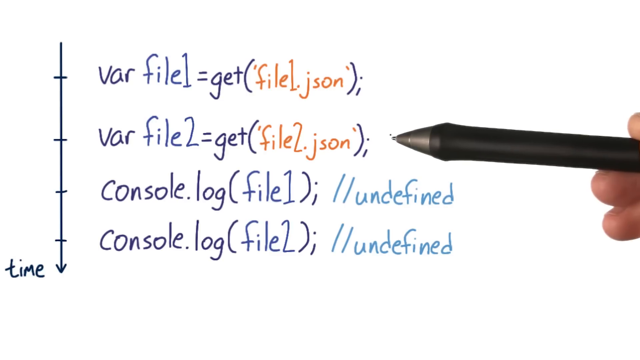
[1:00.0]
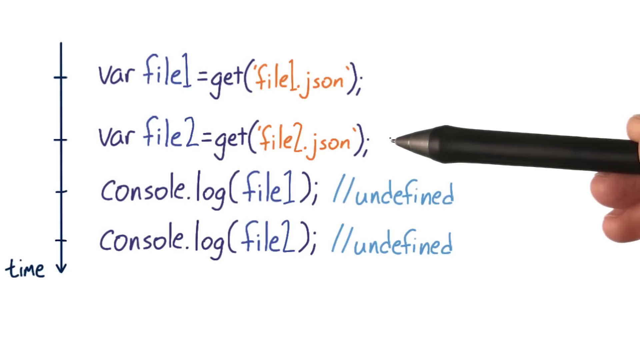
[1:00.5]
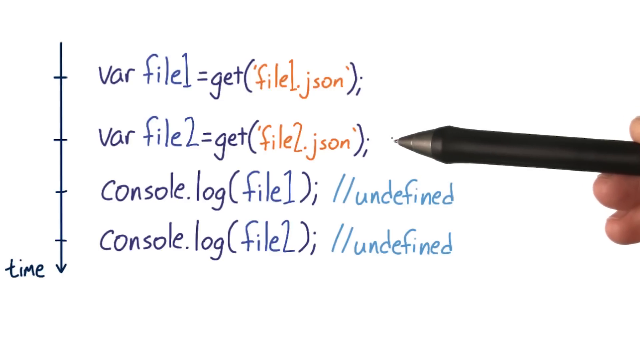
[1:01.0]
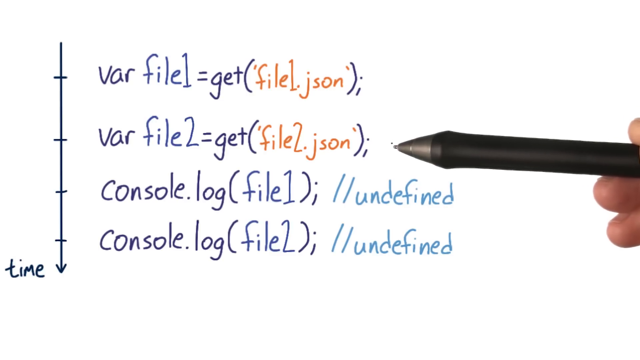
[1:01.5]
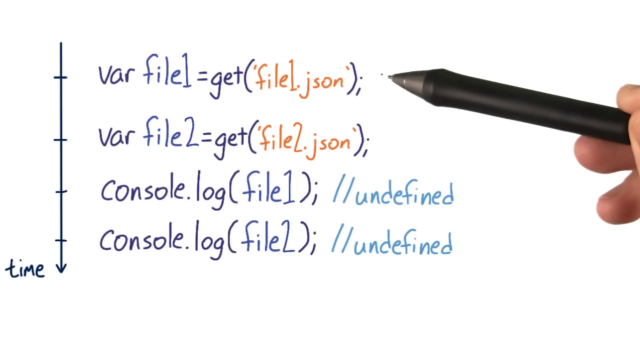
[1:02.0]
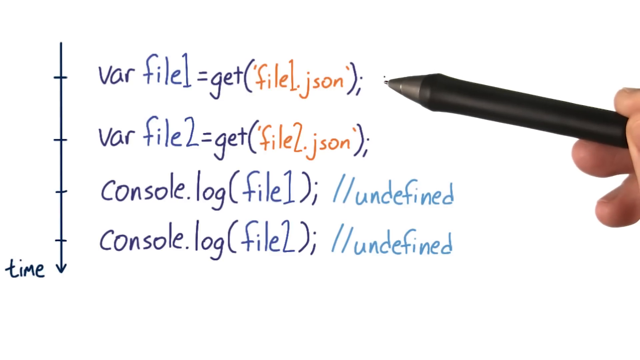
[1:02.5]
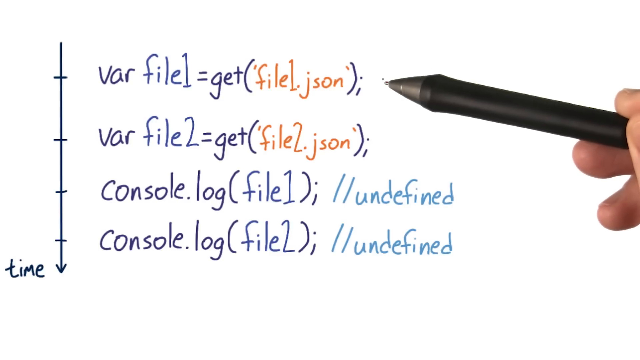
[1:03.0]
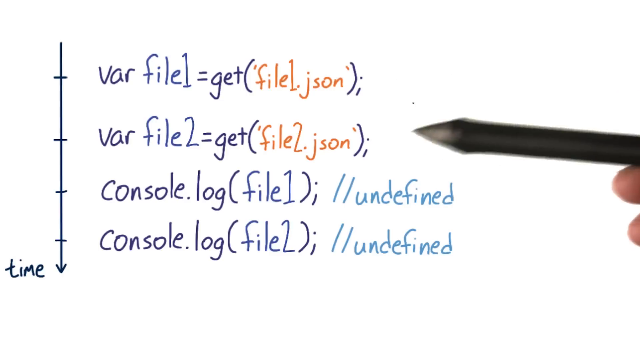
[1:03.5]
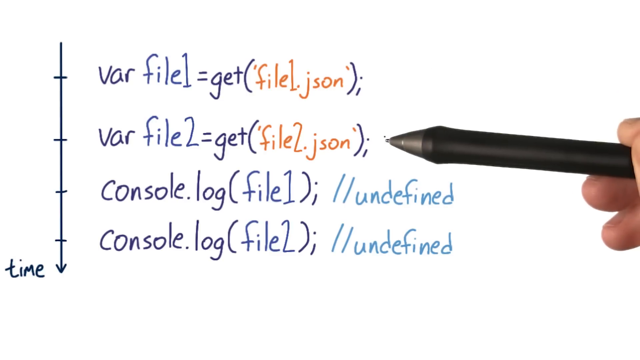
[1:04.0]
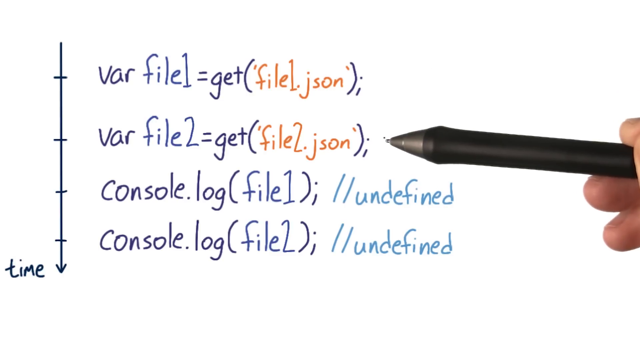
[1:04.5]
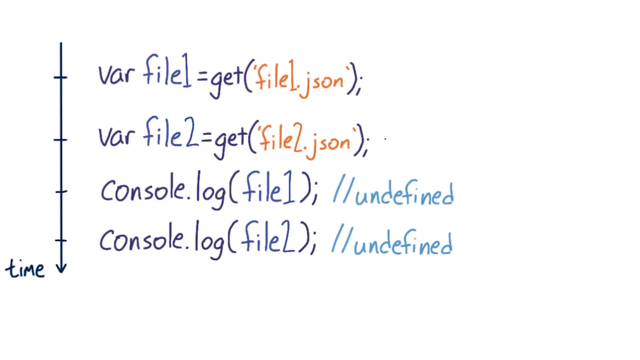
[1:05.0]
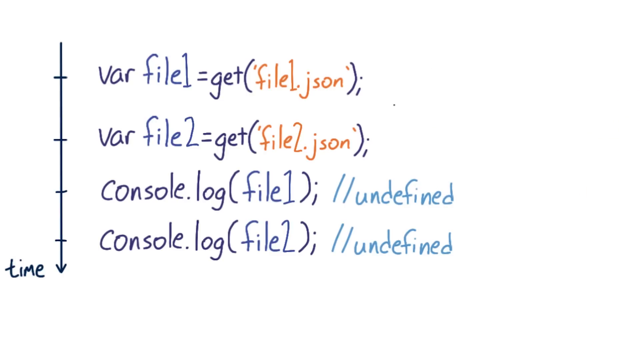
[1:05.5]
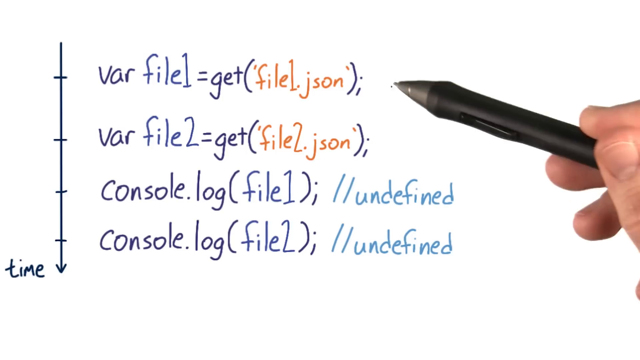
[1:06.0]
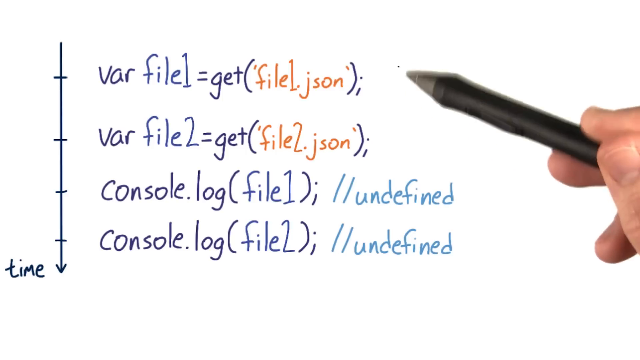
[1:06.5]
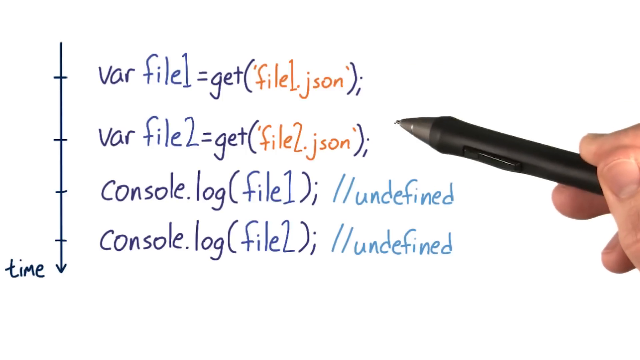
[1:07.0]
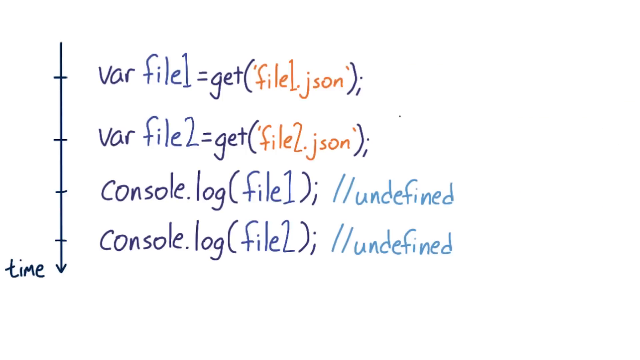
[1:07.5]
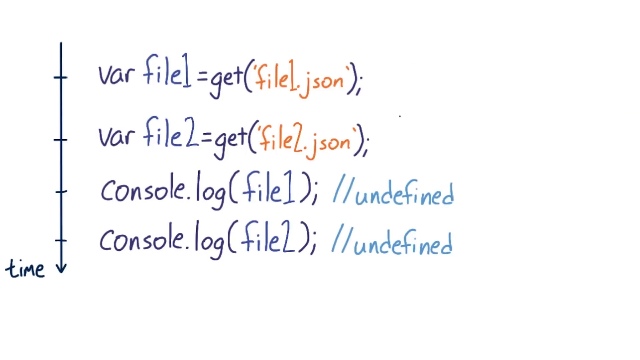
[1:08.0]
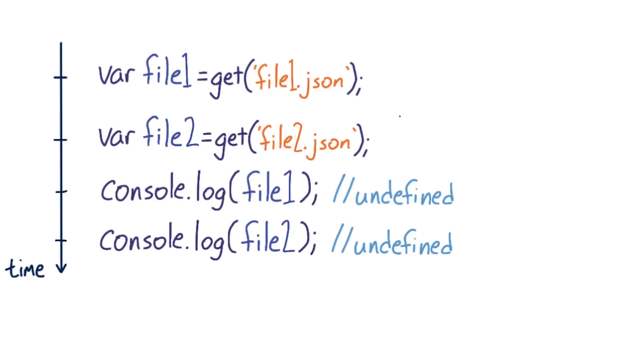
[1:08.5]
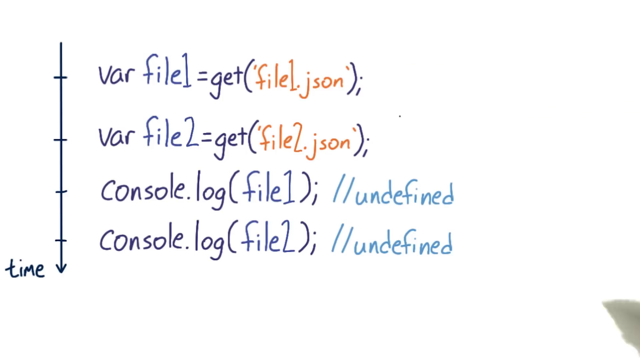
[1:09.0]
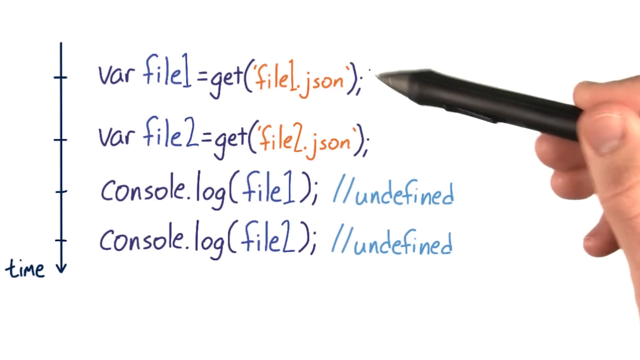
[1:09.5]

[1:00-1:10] The written lines of code remain on screen, running top to bottom to the right of a vertical line with marks on it that separate each line. From the top they read "var file1 = get(file1.json)", "var file2 = get(file2.json)", "console.log(file1); //undefined" and "console.log(file2); //undefined". The person keeps pointing at the lines of code with a pen, most likely discussing them.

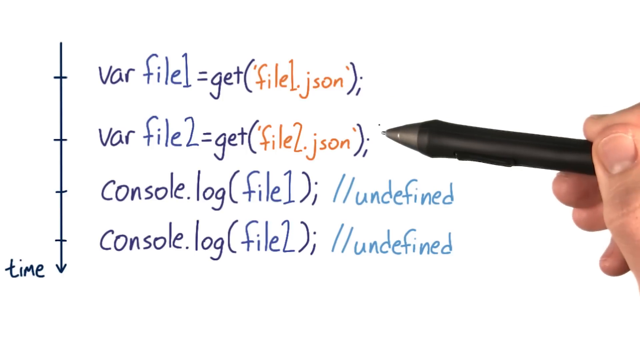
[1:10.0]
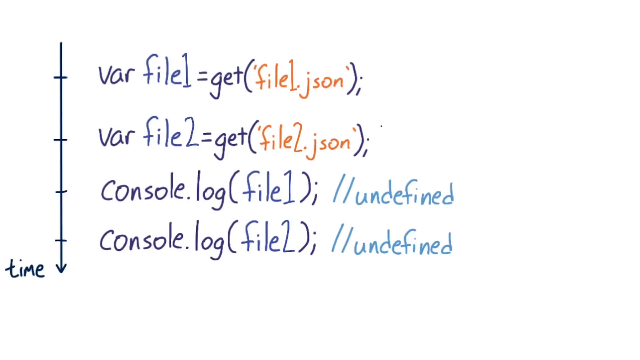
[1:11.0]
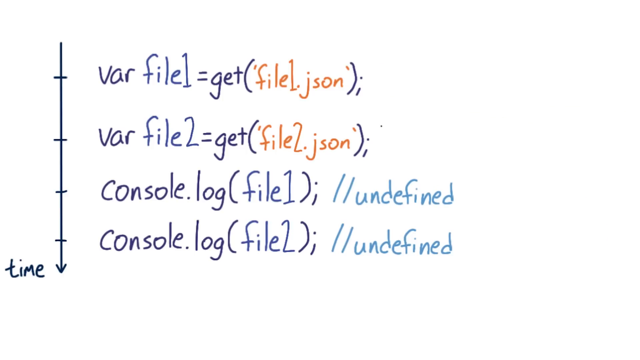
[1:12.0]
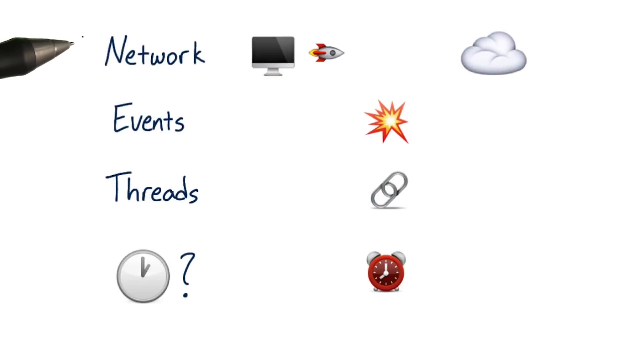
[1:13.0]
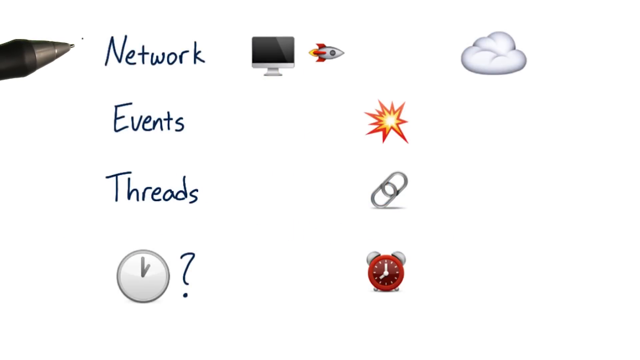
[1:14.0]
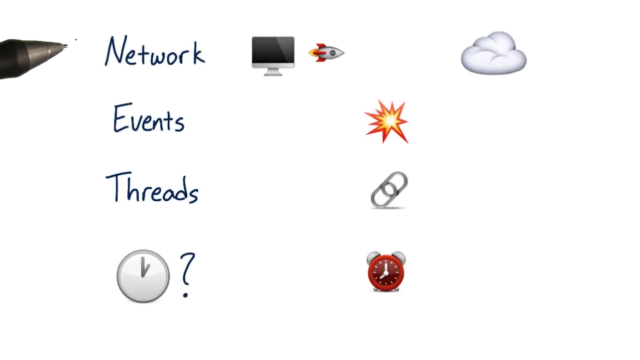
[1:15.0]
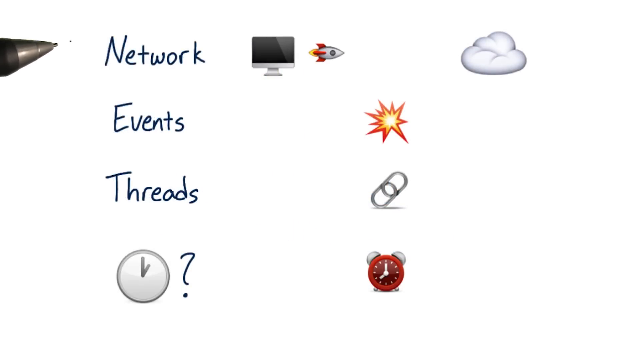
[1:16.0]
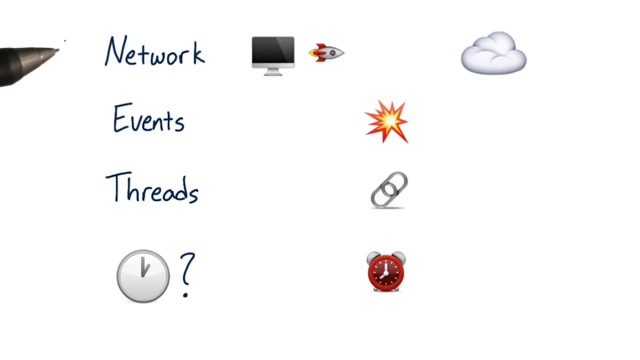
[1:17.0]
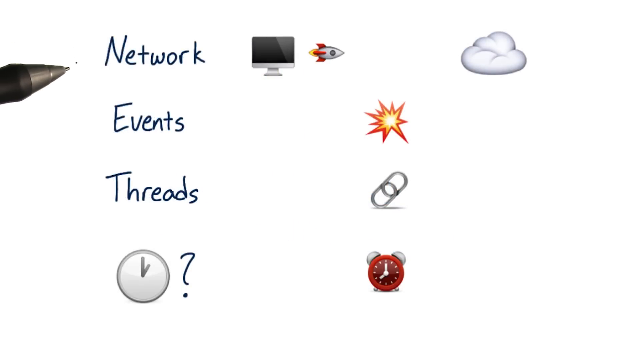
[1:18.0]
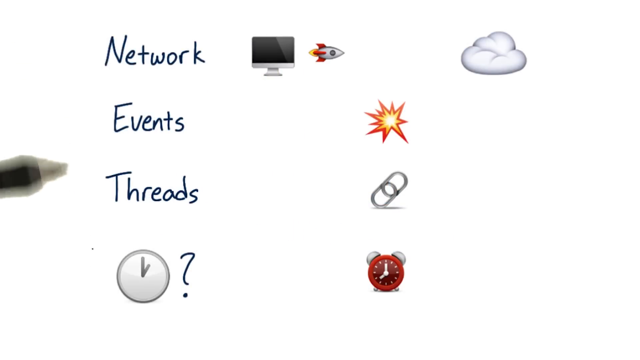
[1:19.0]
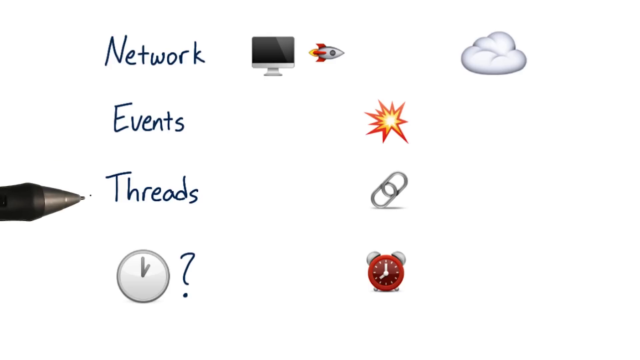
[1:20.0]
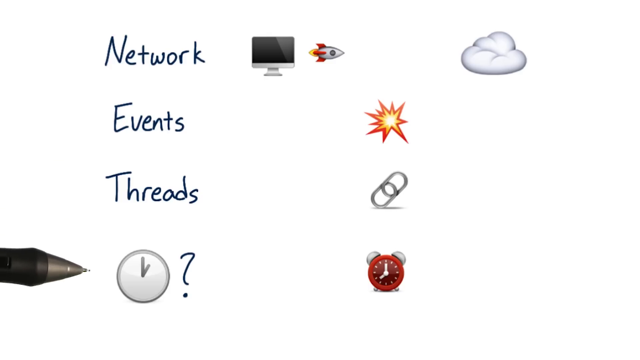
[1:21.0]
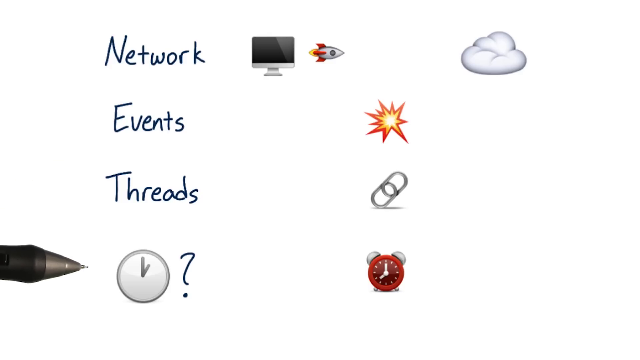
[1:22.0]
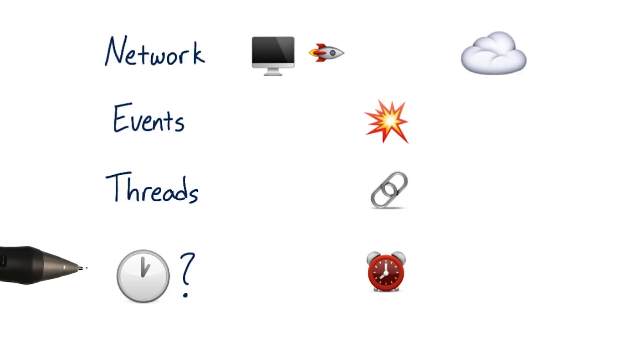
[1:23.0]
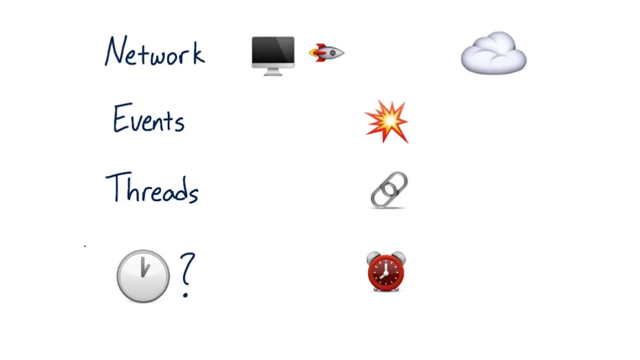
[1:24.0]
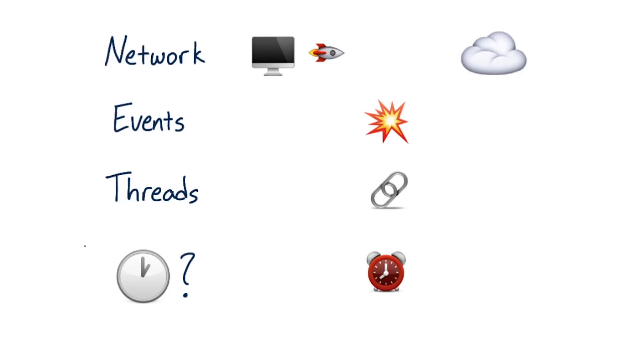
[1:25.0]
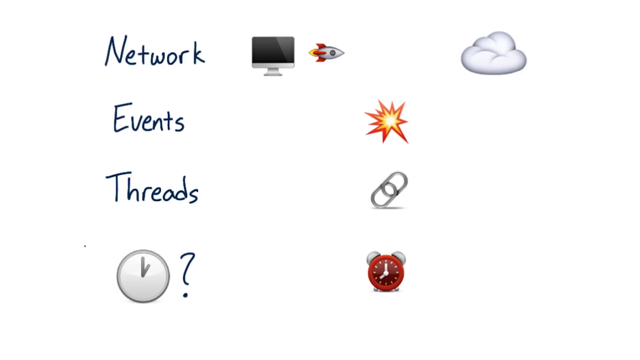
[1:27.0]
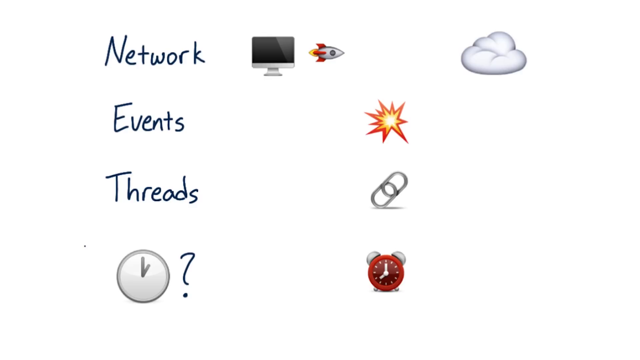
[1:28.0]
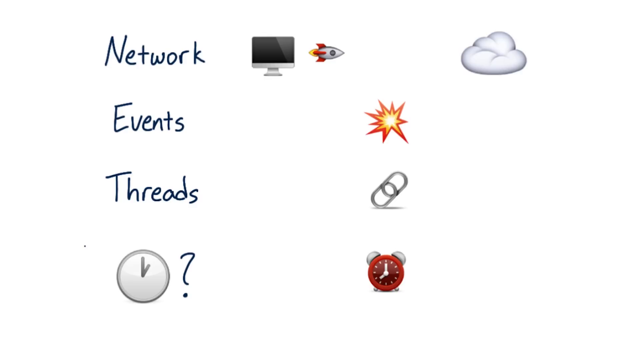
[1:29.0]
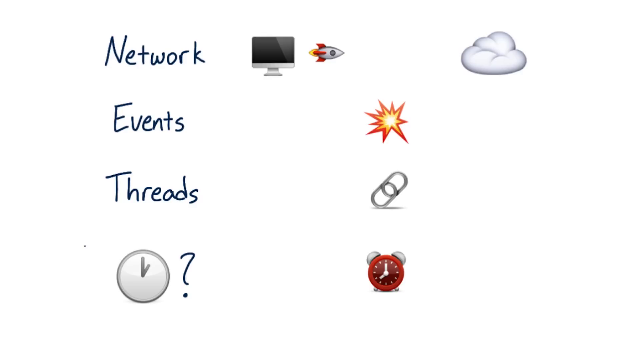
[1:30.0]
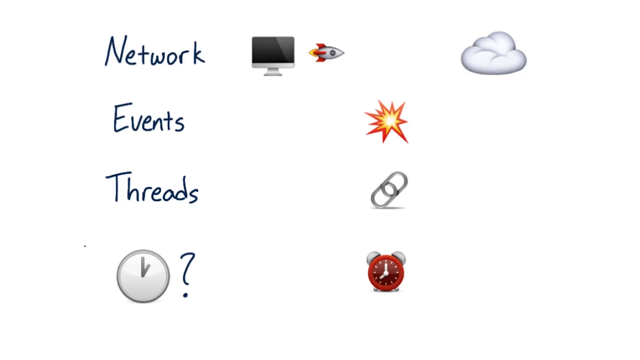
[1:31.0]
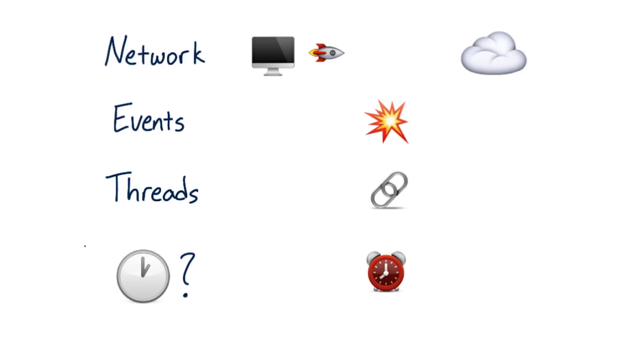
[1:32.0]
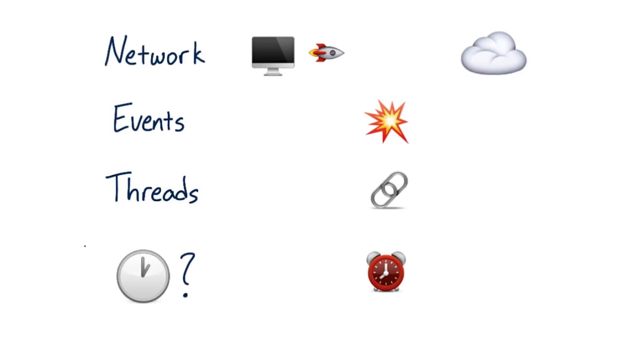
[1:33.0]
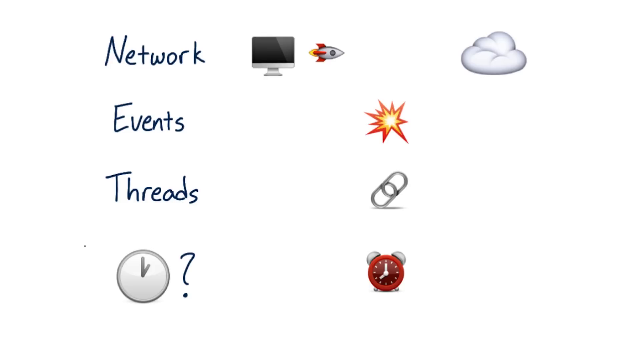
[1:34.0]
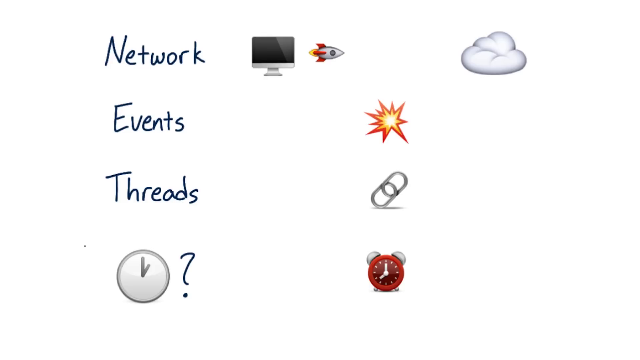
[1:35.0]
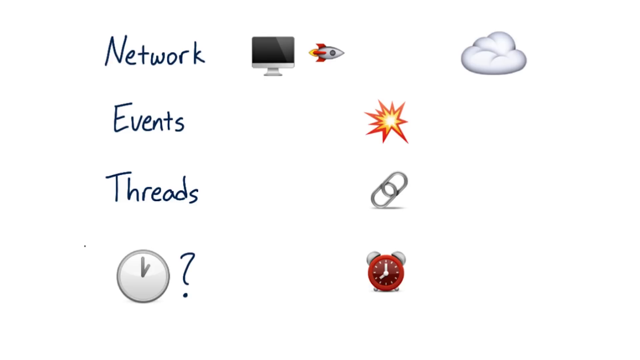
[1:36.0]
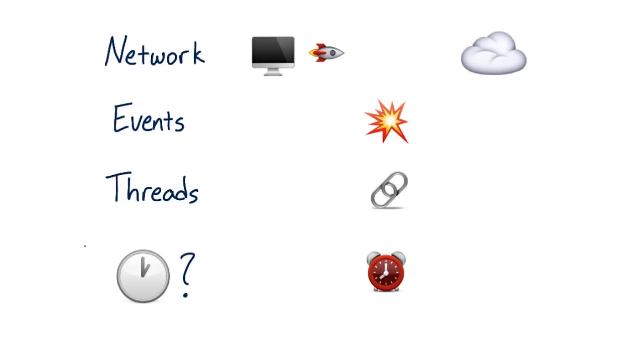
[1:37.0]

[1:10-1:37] The written-out code is still shown. From top to bottom it reads "var file1 = get(file1.json);", "var file2 = get(file2.json);", "console.log(file1); //undefined", and on the bottom line "console.log(file1); //undefined". The view then moves to another screen with three written options: "network", "events" and "threads". The person uses a pen, apparently to talk about each one. Each option has visual illustrations next to it. Network has a picture of a computer monitor, an emoji of a rocket ship and then a cloud. Under events there is what looks like an explosion emoji. Threads has a paper clip. At the bottom there is what looks like a clock emoji with a question mark next to it, and next to that an alarm clock image. The person points up and down at all these options, apparently tying them to the code shown earlier.